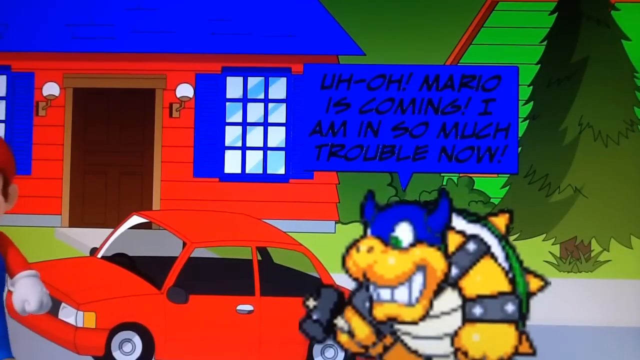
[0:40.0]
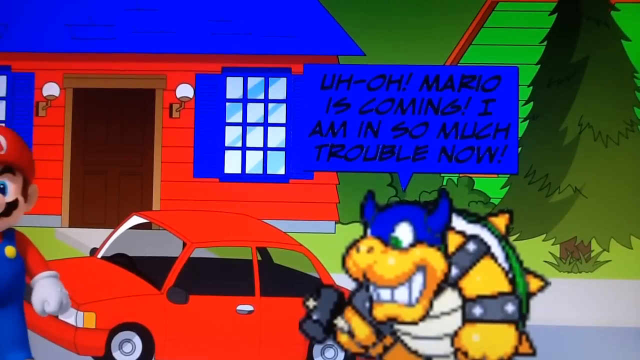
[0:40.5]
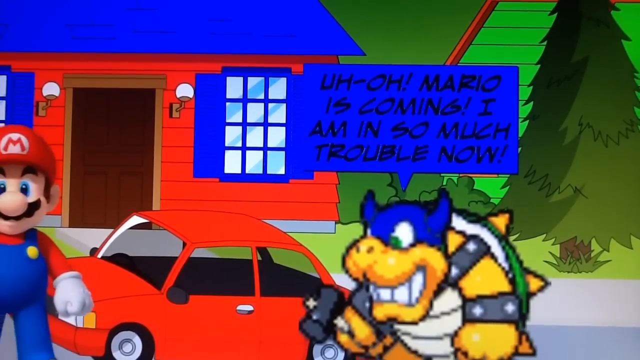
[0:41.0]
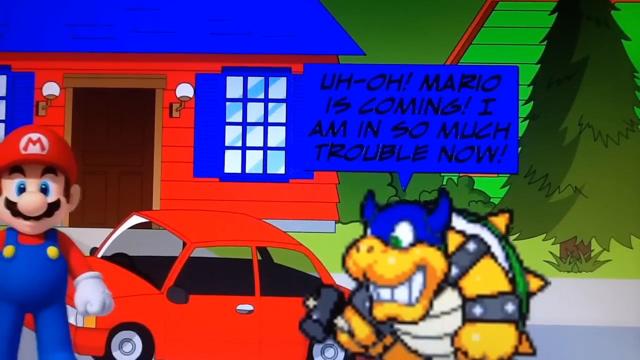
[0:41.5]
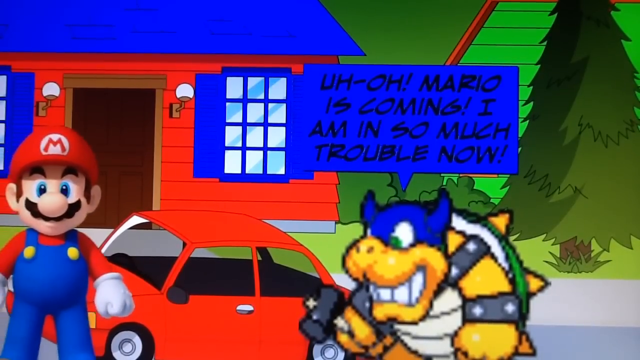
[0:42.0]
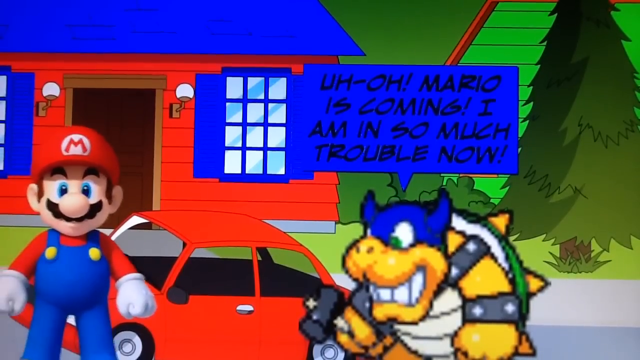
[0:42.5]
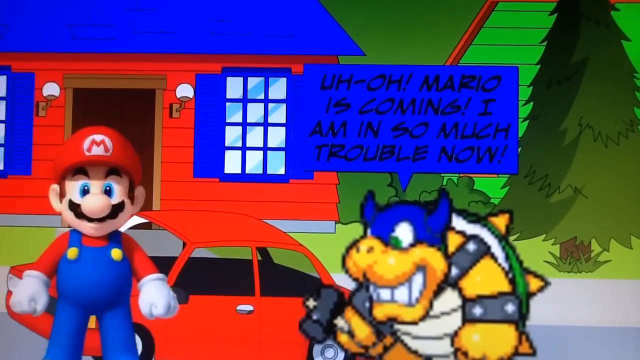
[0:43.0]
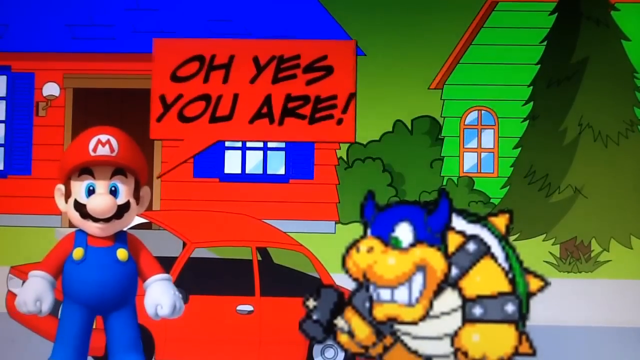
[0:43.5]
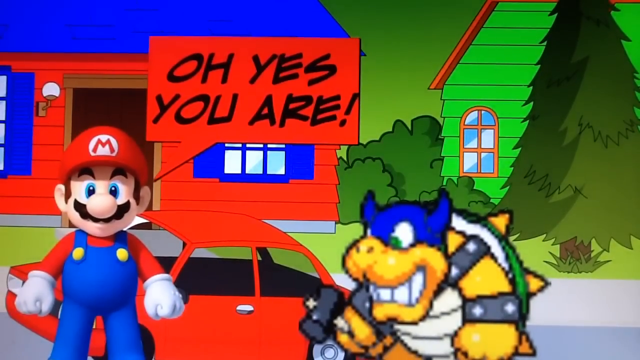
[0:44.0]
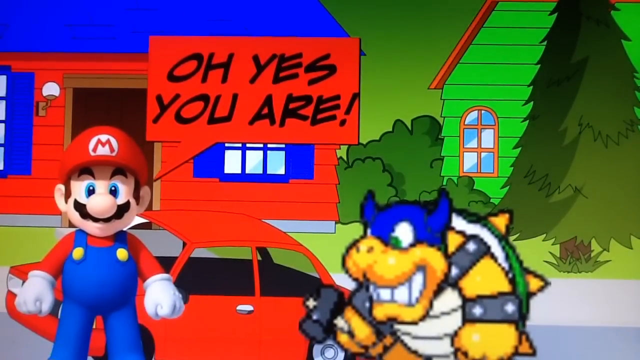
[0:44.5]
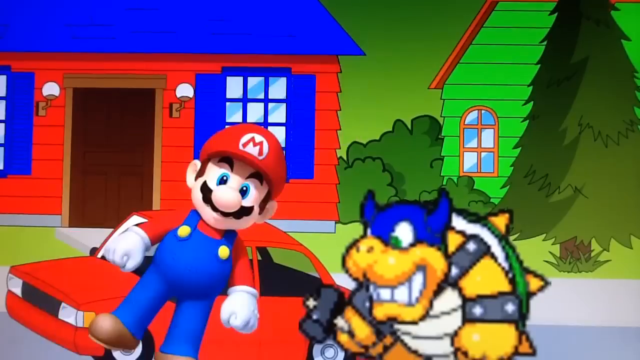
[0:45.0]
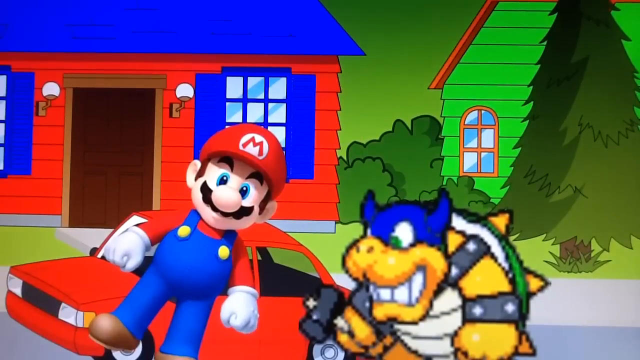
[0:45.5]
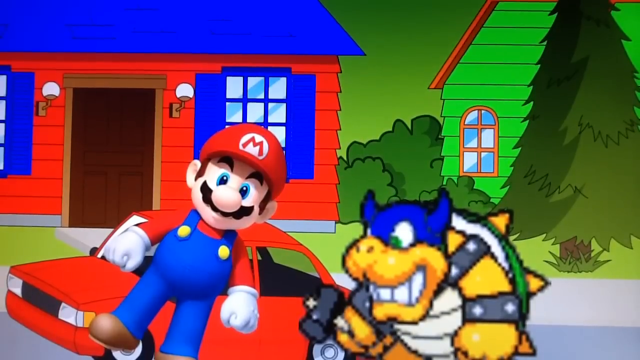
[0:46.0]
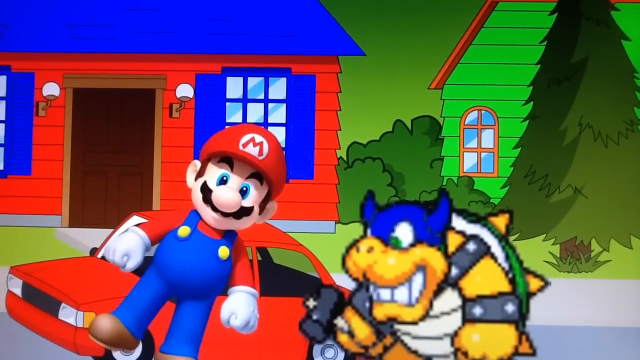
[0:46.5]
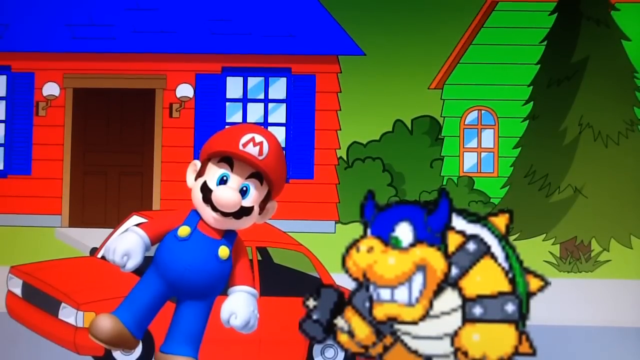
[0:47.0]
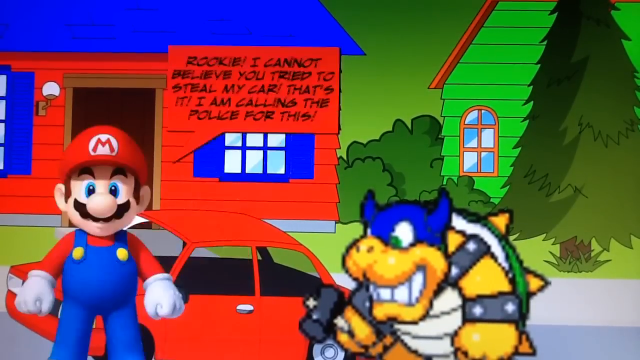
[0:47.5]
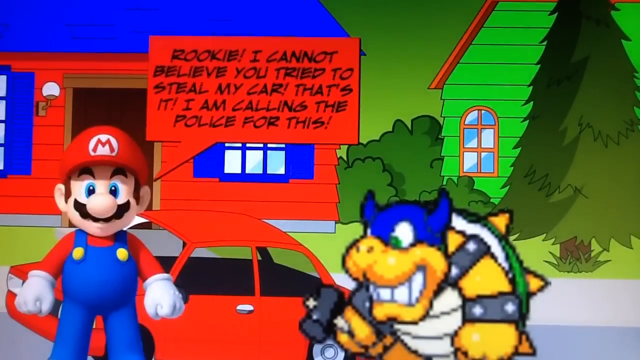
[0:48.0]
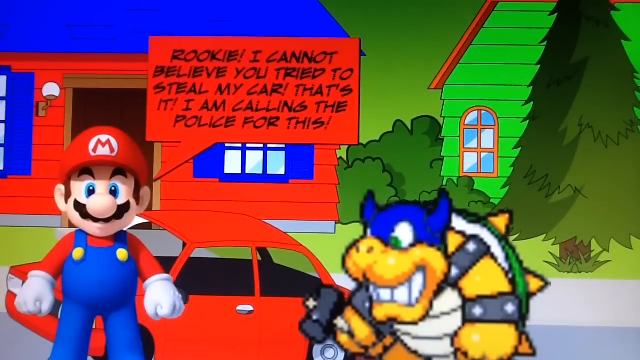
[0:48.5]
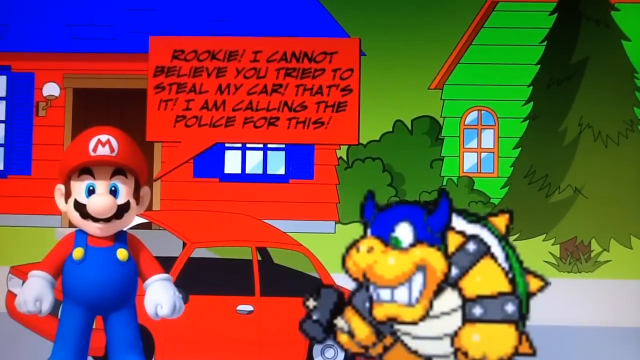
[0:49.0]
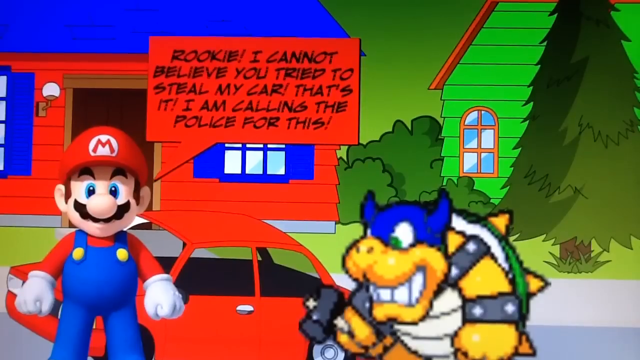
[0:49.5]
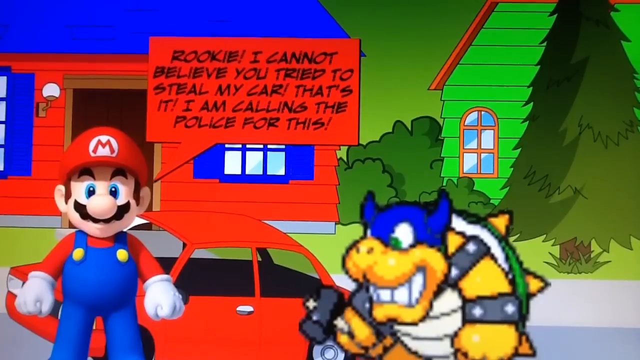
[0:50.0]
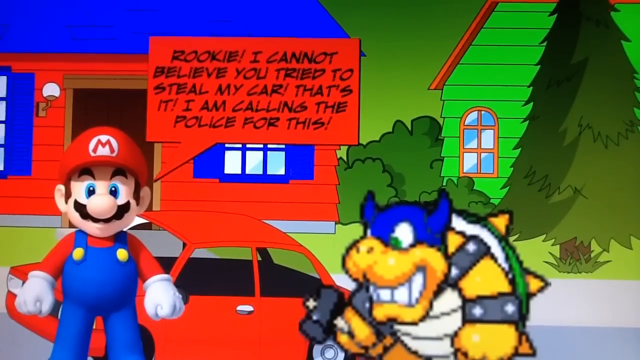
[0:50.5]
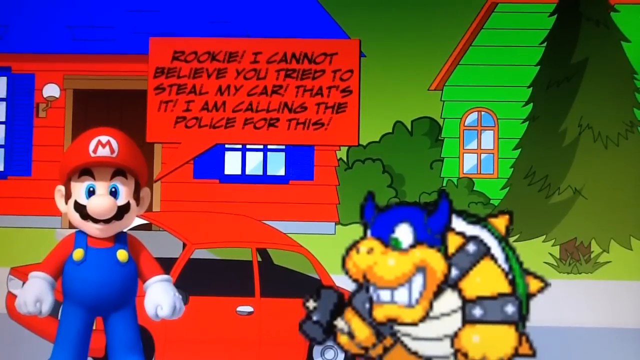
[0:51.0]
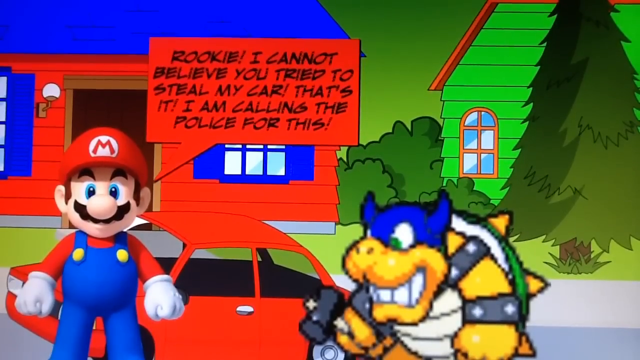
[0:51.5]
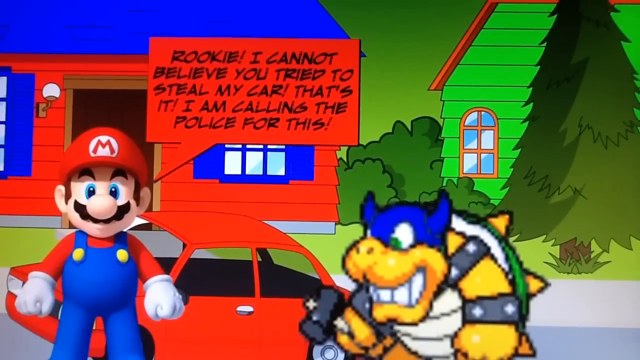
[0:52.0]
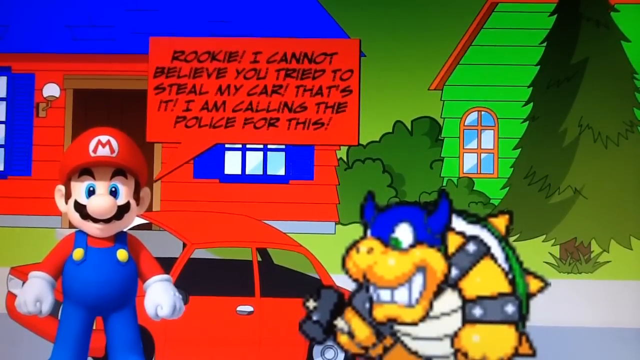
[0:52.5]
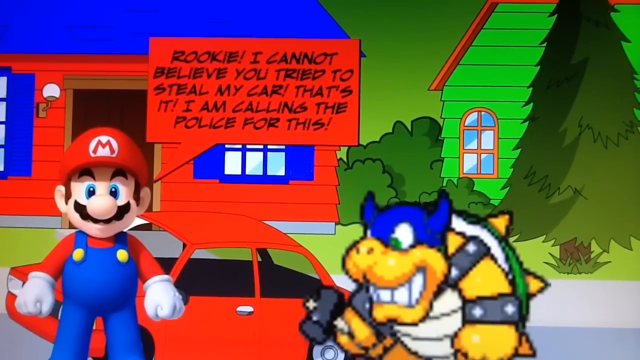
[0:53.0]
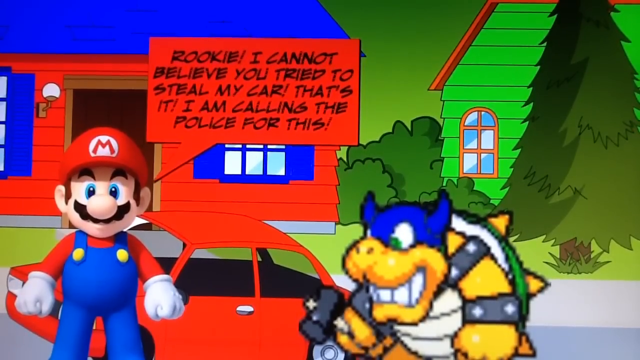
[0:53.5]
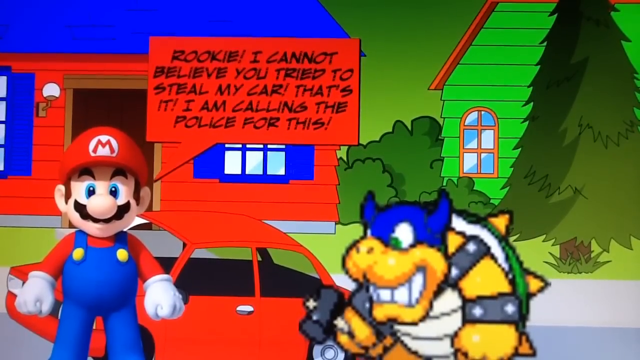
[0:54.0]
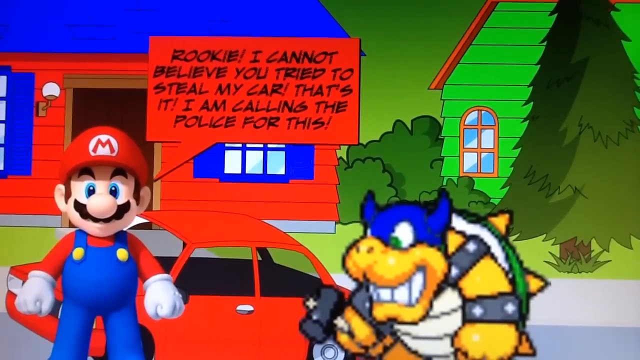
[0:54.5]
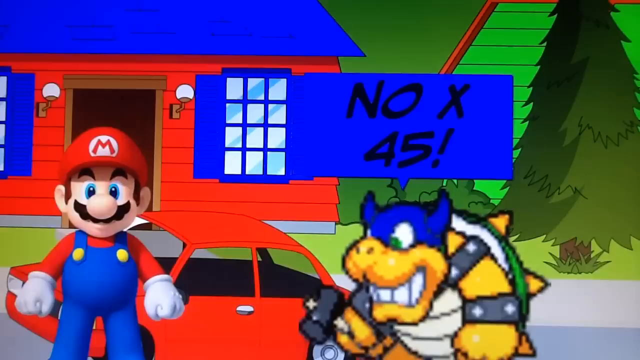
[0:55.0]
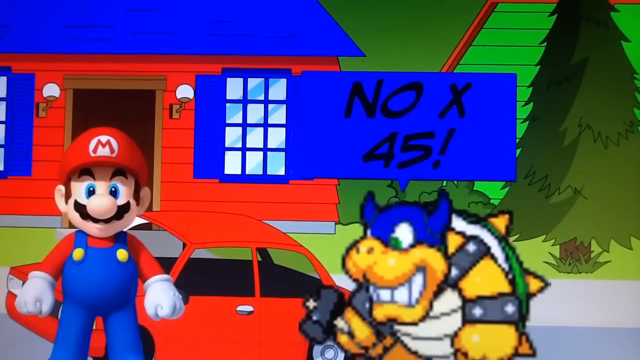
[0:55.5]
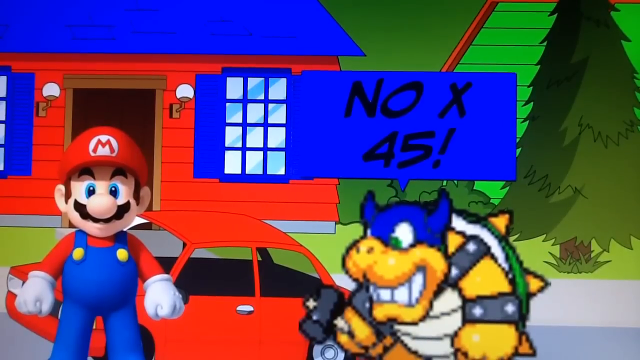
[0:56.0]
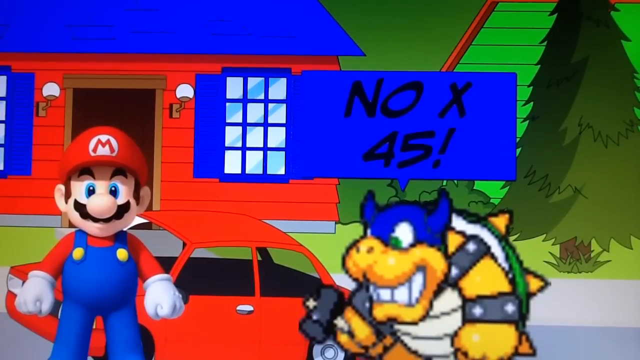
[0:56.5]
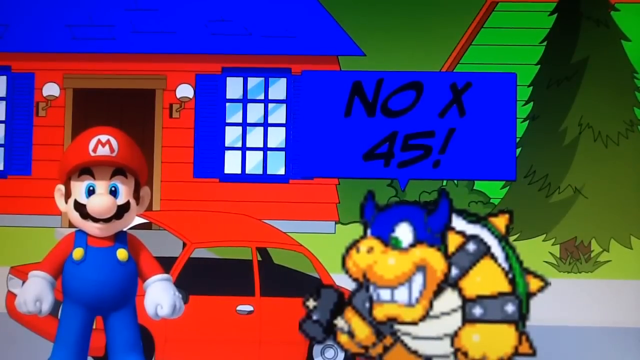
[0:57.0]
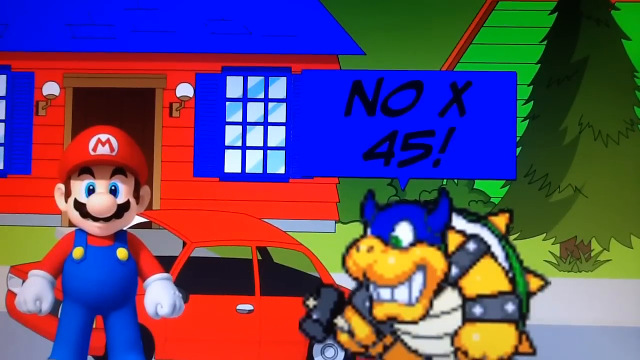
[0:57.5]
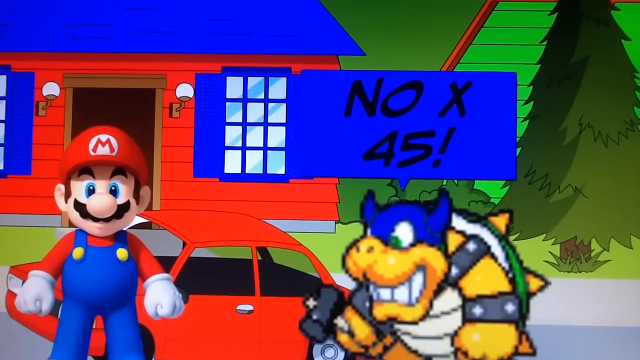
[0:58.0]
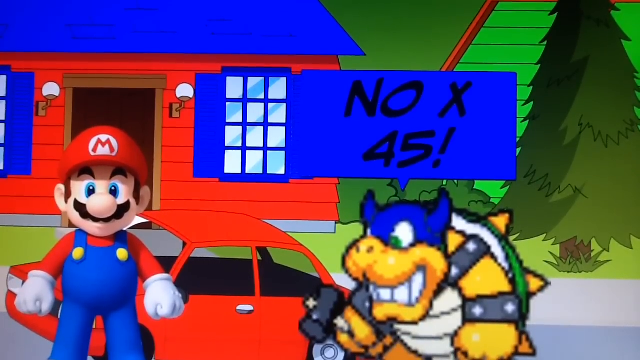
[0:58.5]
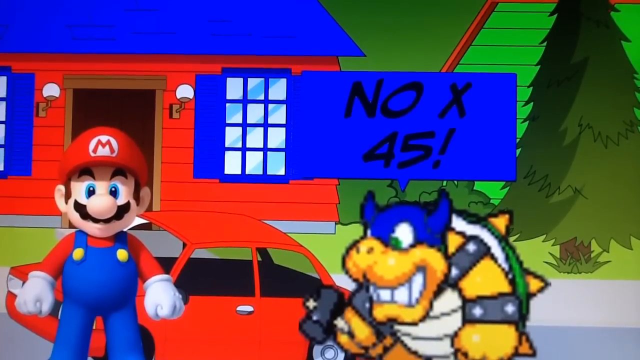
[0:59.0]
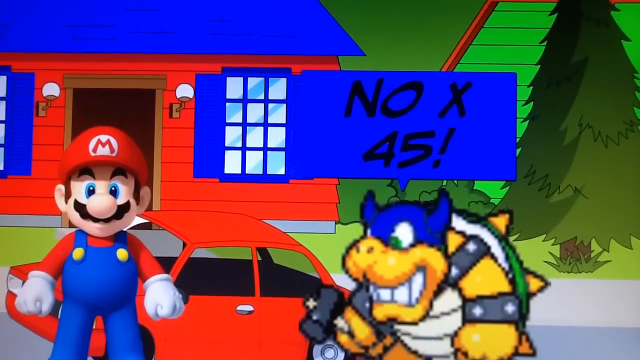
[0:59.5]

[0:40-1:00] Rookie stands next to Mario's red sedan, having failed to break into and steal it, and says, "Uh-oh, Mario is coming. I'm in so much trouble now!" Mario comes in from the left. While the background and Rookie are drawn like cartoons, Mario looks like a figurine rather than a drawing, almost like a little Mario action figure, appearing more three-dimensional than the other character. Mario says, "Rookie, I cannot believe you tried to steal my car. That's it. I'm calling the police for this." All of the dialogue appears in cartoon bubbles. Rookie replies with a bubble beginning "No."